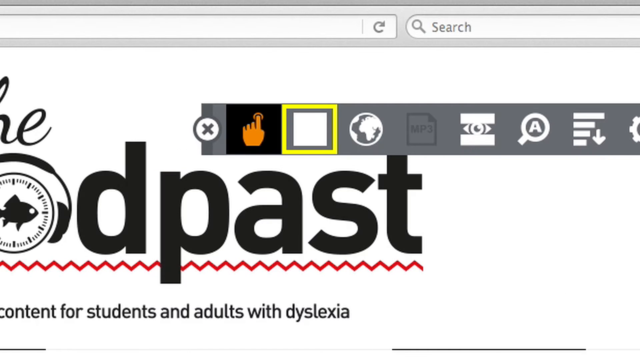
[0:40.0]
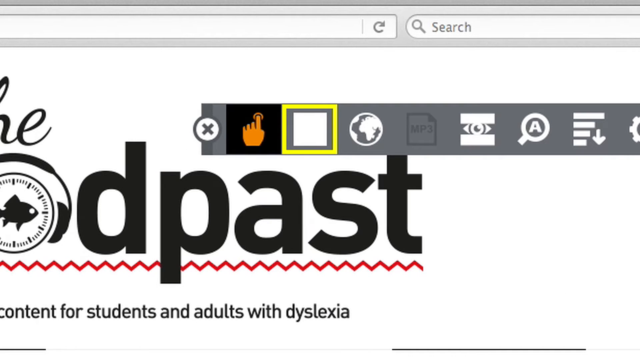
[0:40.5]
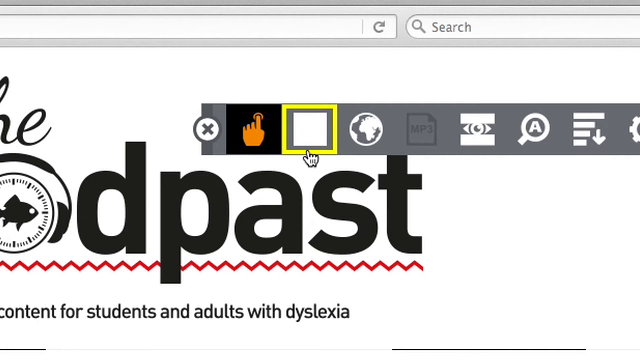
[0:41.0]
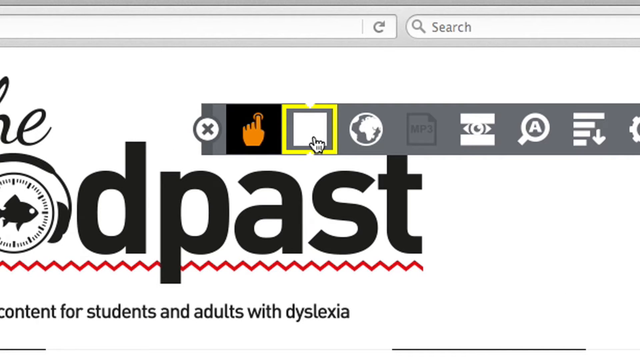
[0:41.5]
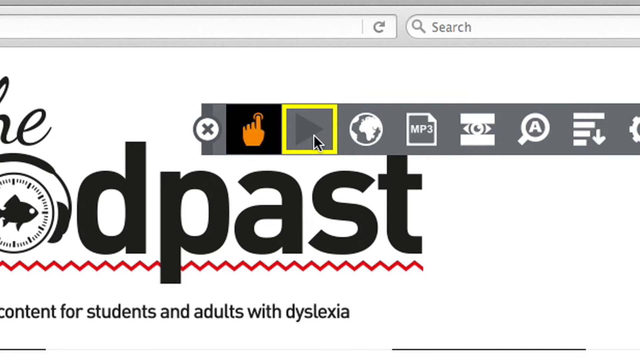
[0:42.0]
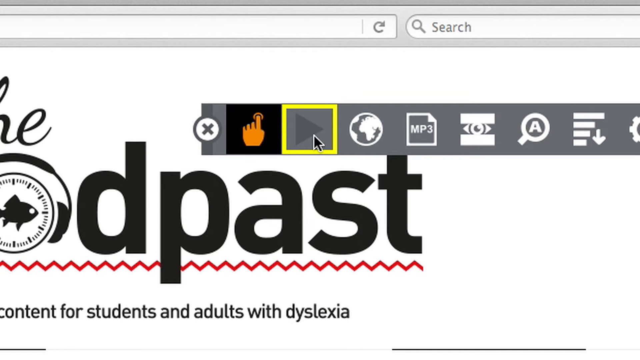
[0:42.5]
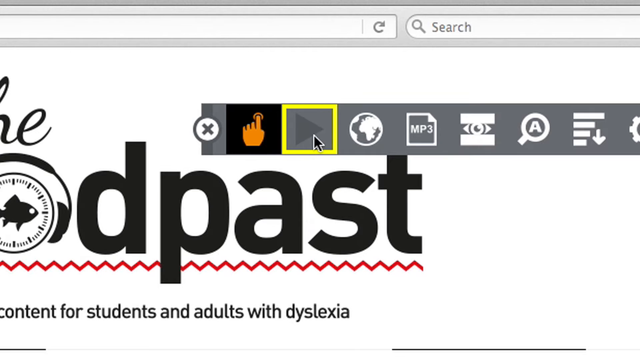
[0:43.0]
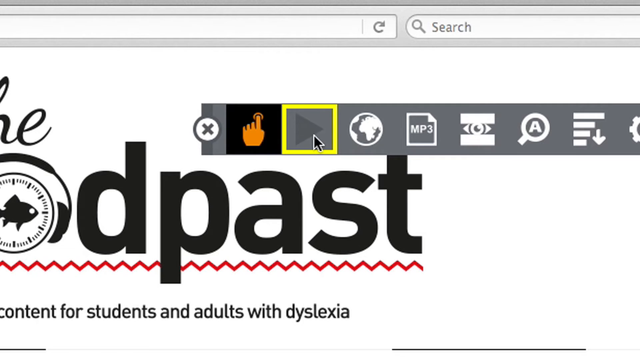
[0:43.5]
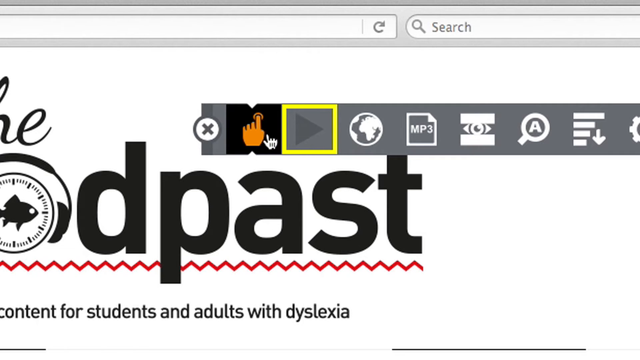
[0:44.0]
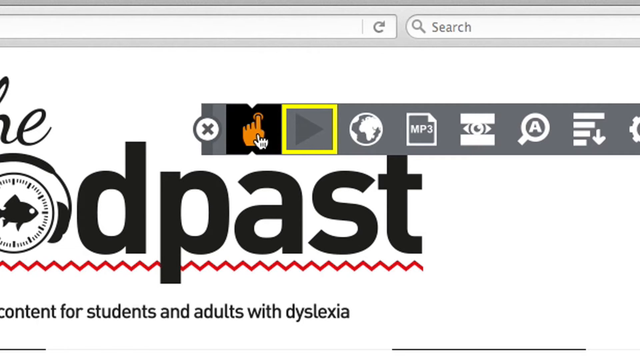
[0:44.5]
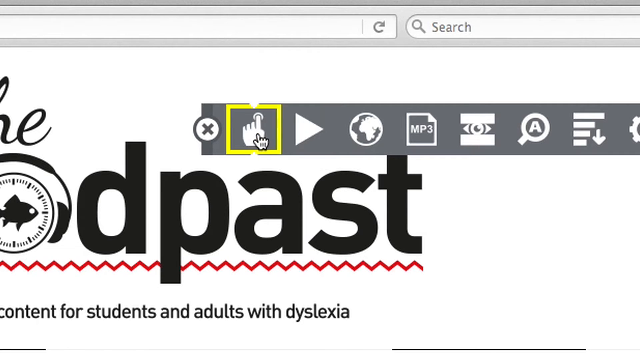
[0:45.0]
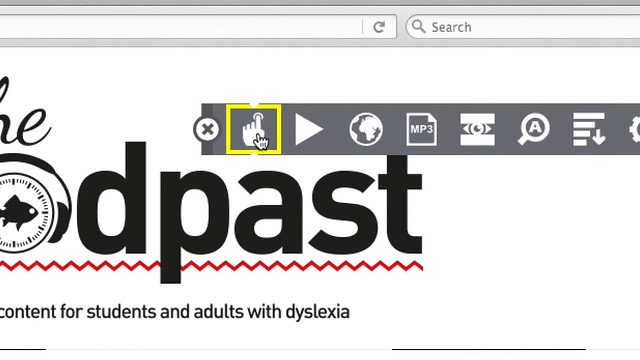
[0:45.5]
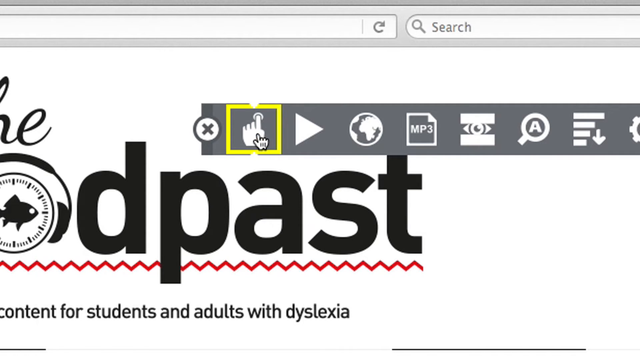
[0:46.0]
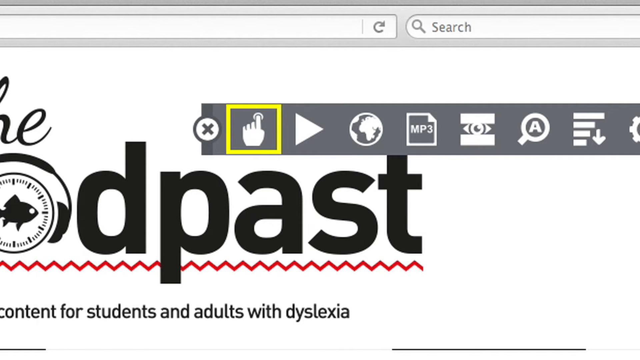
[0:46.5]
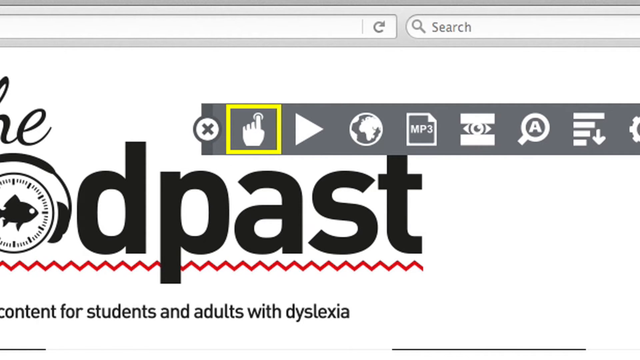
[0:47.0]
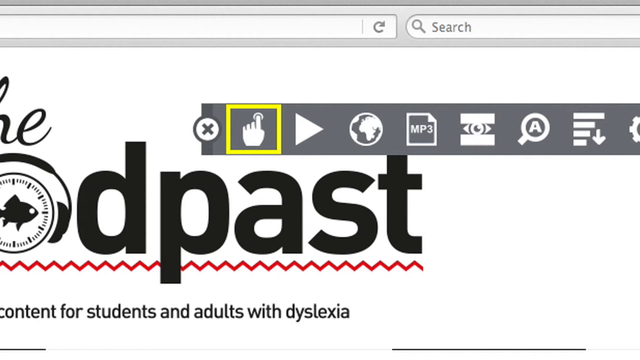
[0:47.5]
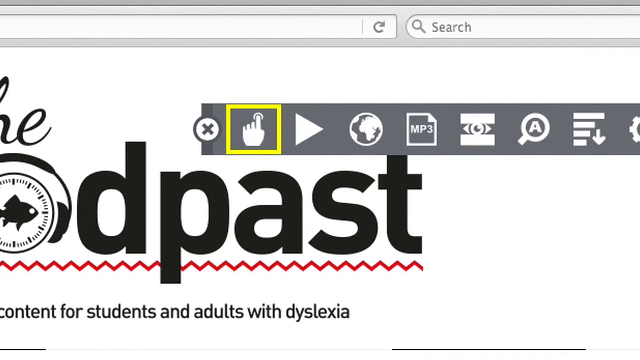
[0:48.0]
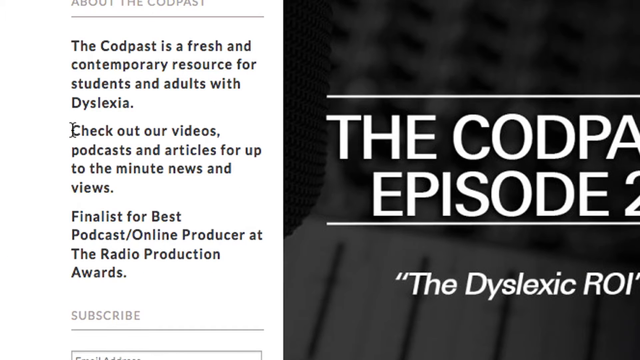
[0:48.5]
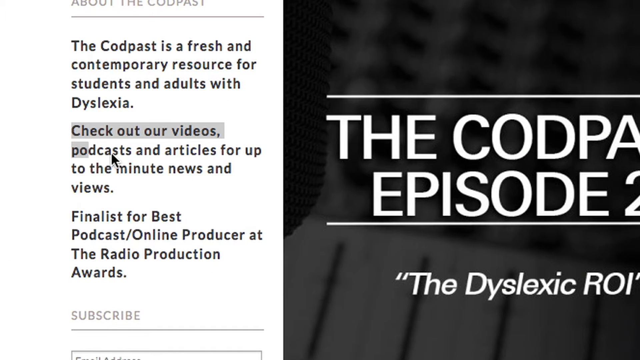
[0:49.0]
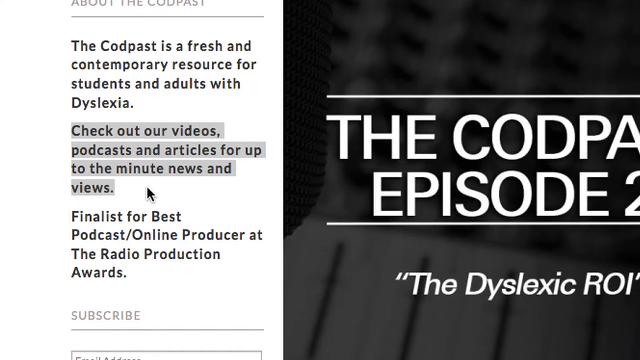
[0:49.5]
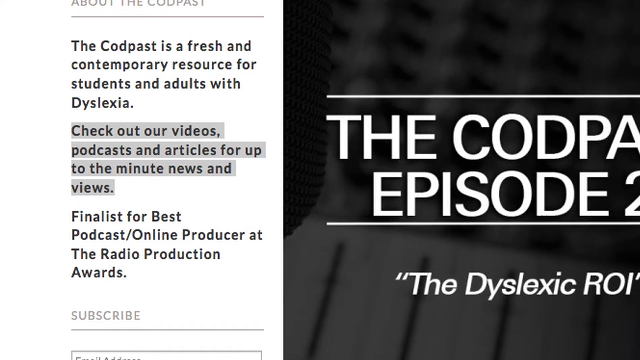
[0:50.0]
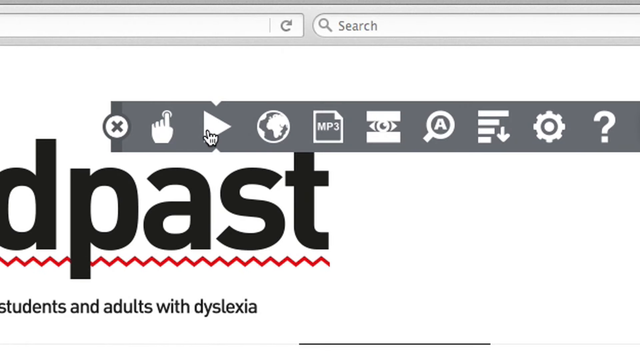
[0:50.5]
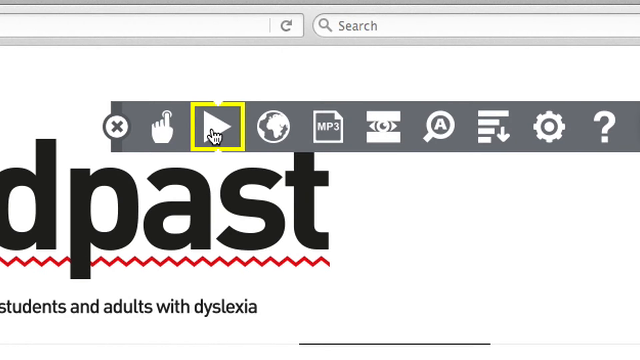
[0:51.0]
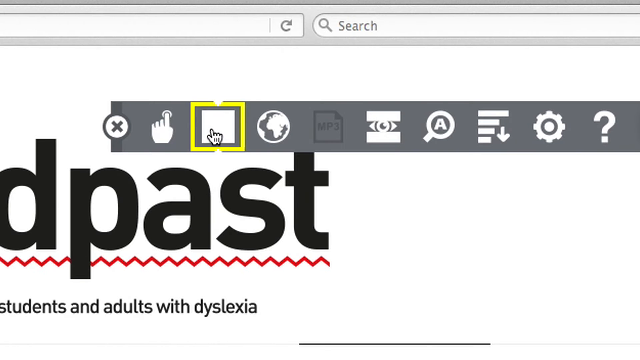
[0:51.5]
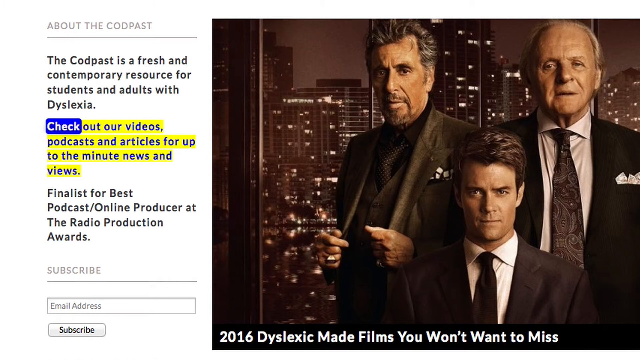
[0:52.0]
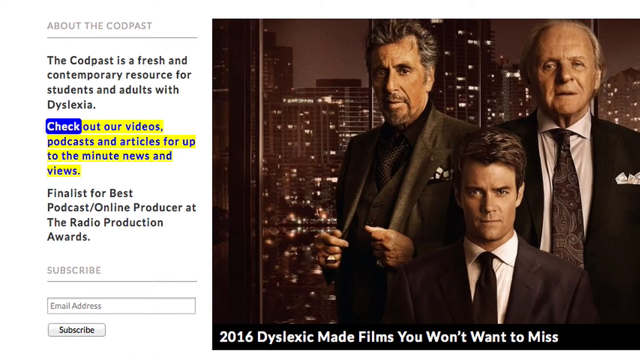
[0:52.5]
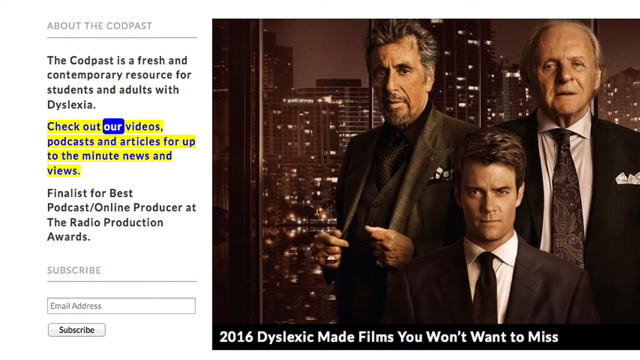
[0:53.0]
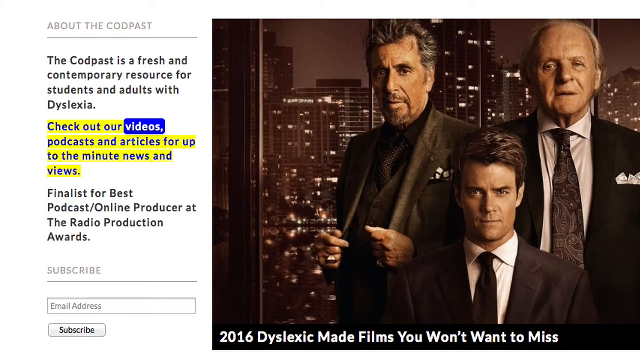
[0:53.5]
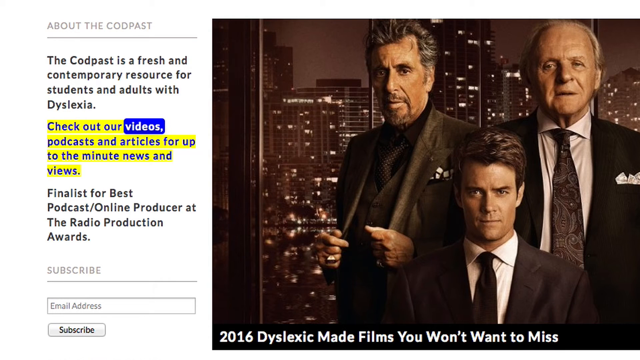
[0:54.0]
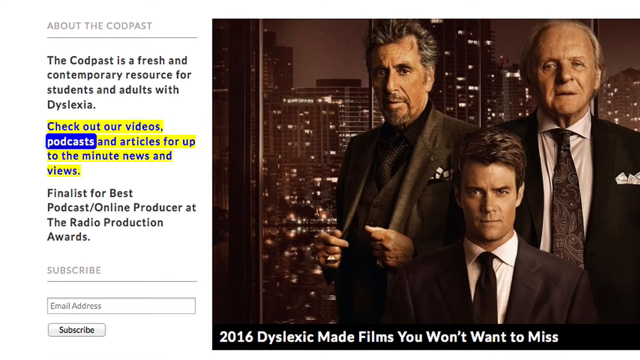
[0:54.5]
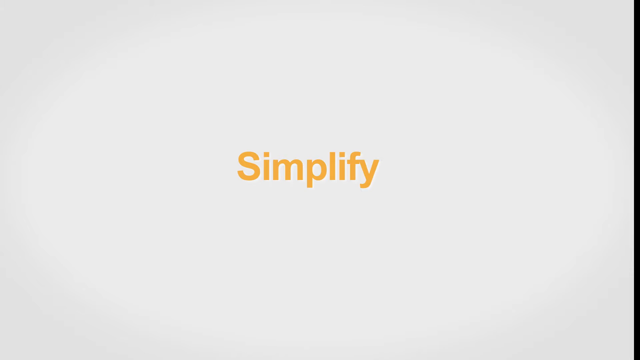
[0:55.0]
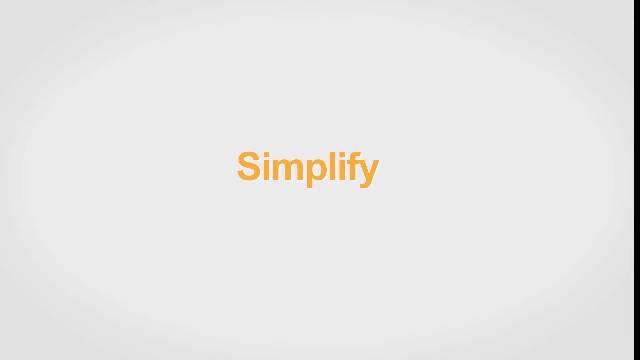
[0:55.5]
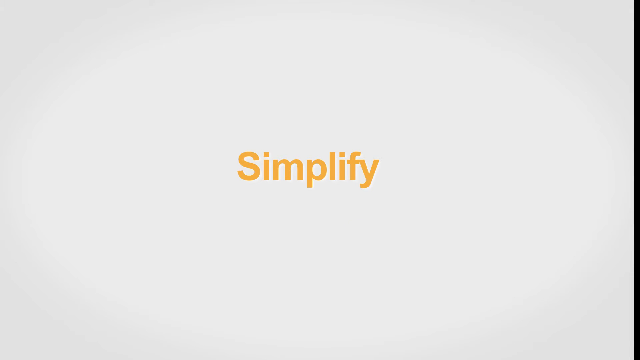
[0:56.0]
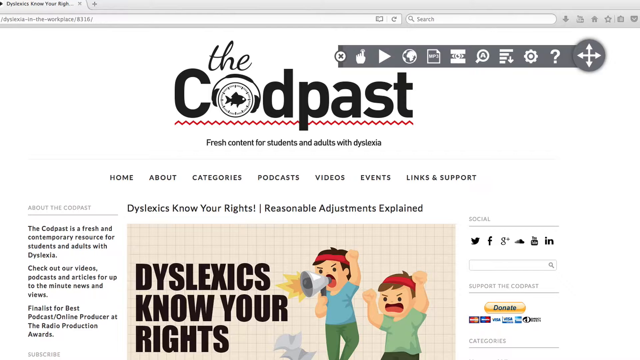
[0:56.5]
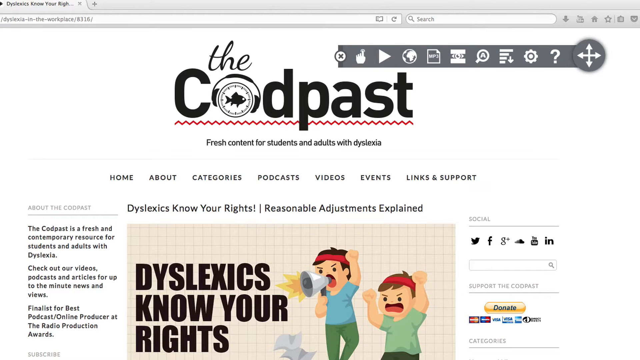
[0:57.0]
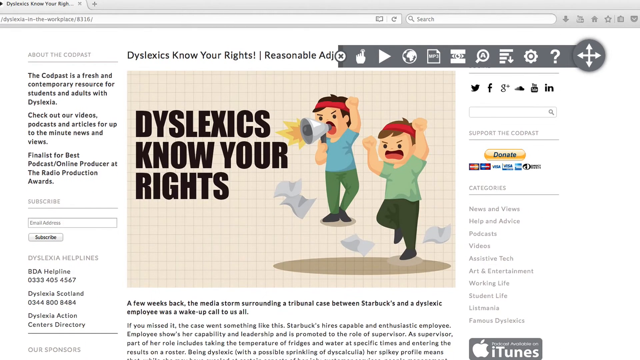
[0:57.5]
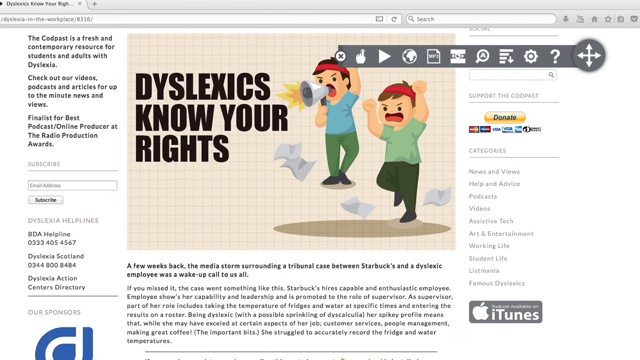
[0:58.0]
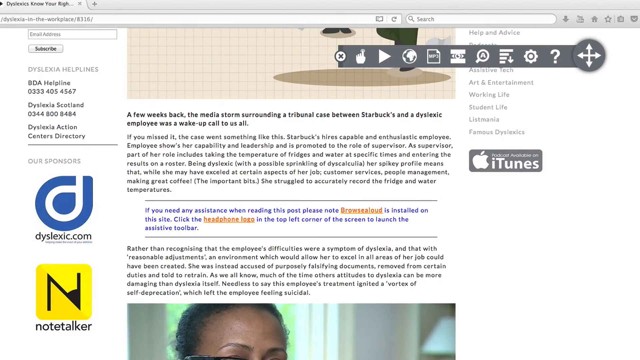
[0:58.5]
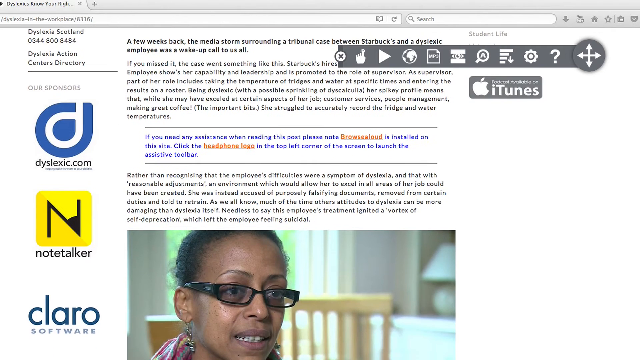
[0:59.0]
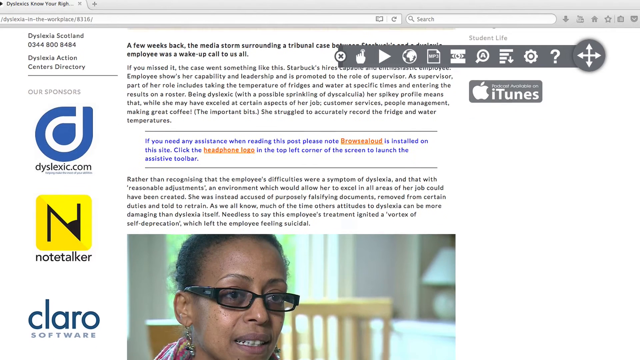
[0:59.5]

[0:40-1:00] The person clicks on different options on the toolbar, hovering over a white page icon and pressing it. They then go to the left and click on an icon of a hand, and the video cuts to some text. They highlight the text, go back to the toolbar and press the play button; the text is shown highlighted as each word is read out. The video cuts to a page that says "simplify," then back to the web page from before, showing an article titled "dyslexics know your rights." The article text reads: "A few weeks back media storms surrounding a tribunal case between Starbucks and dyslexic employee was a wake-up call to us all. If you missed it, the case went something like this. Starbucks hires capable and enthusiastic employee. Employee shows her capability and leadership and it's promoted to the role of supervisor."